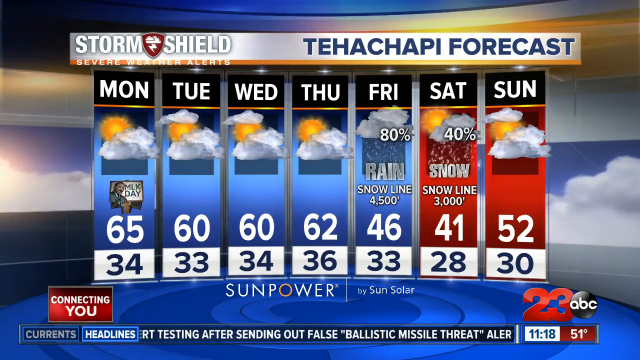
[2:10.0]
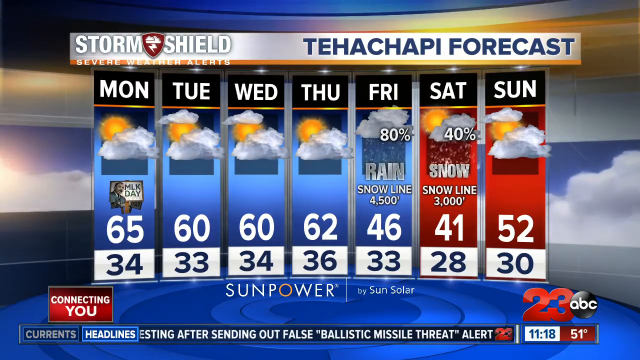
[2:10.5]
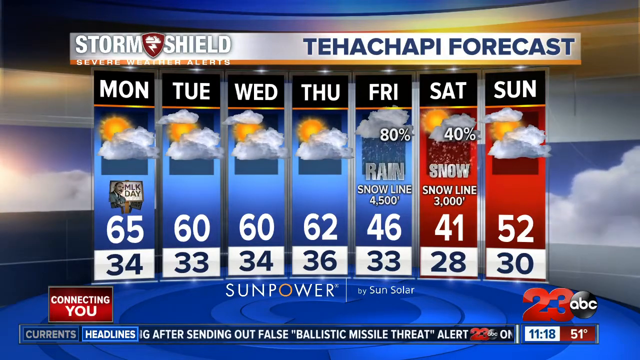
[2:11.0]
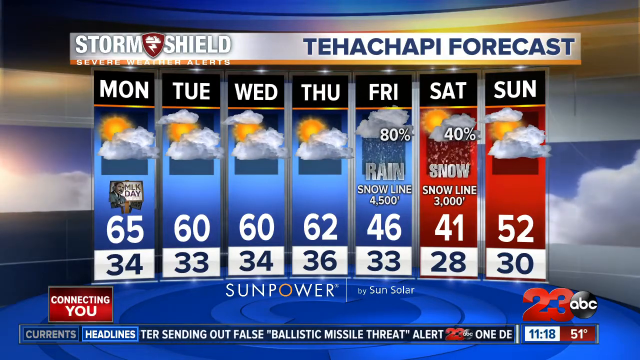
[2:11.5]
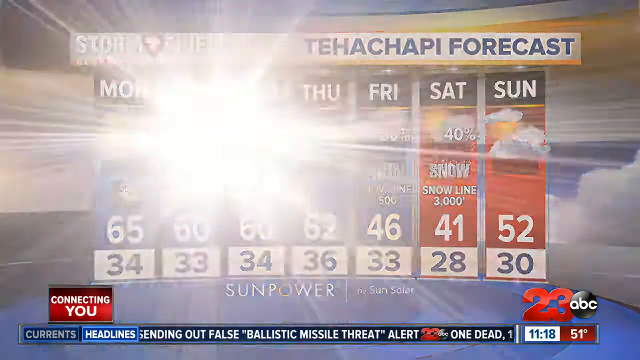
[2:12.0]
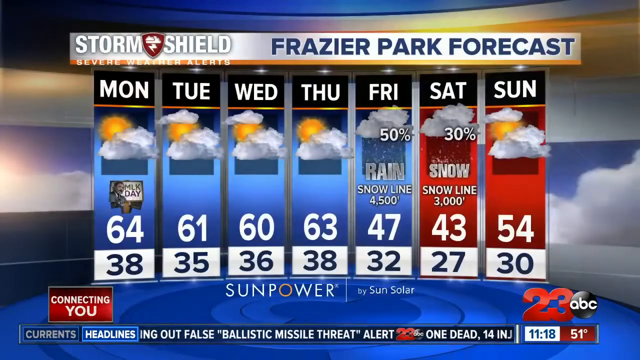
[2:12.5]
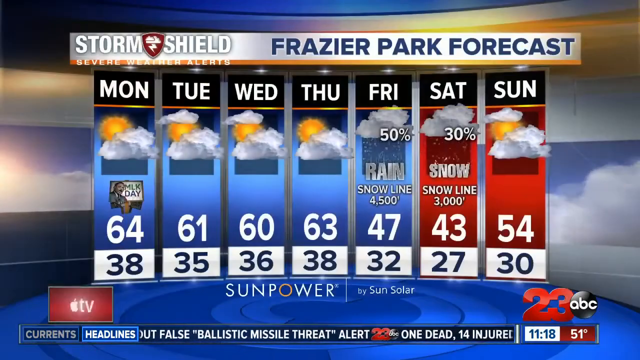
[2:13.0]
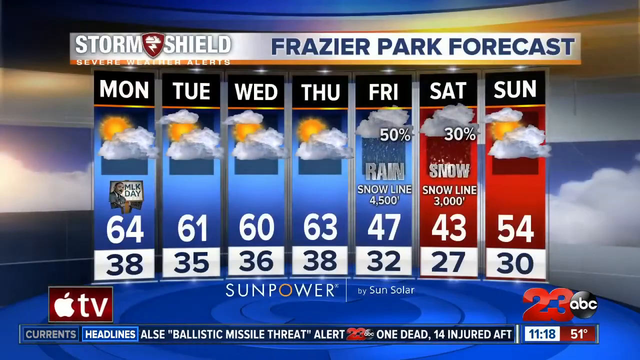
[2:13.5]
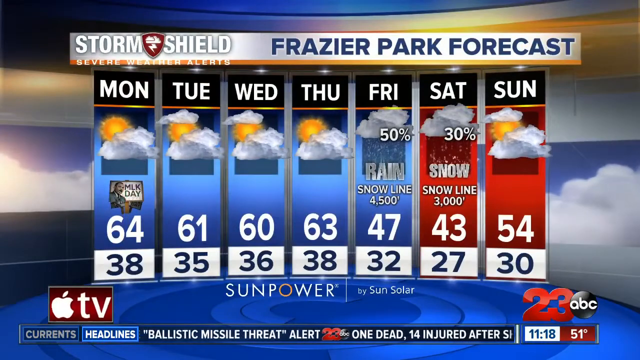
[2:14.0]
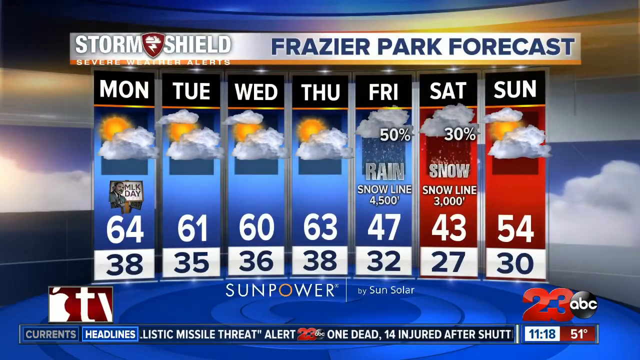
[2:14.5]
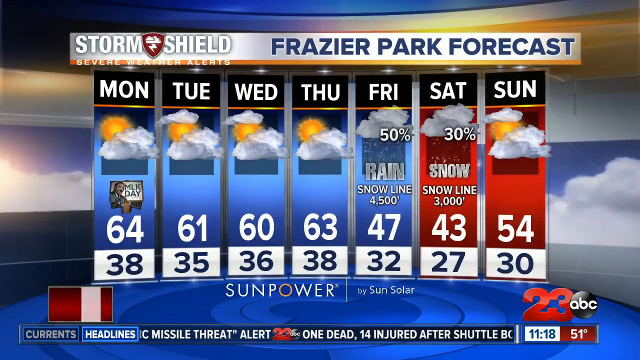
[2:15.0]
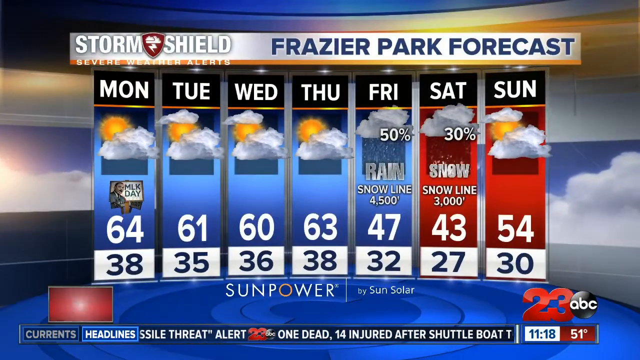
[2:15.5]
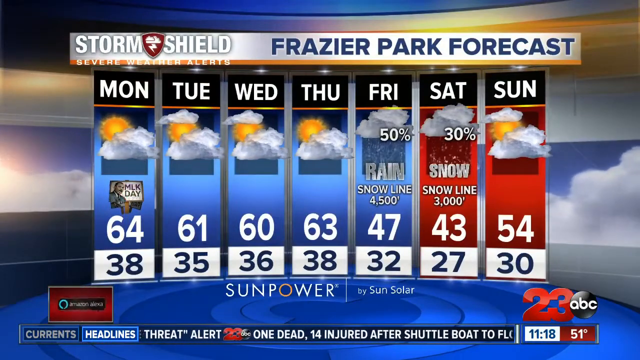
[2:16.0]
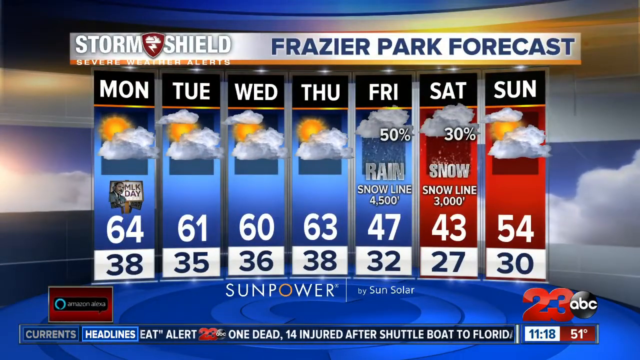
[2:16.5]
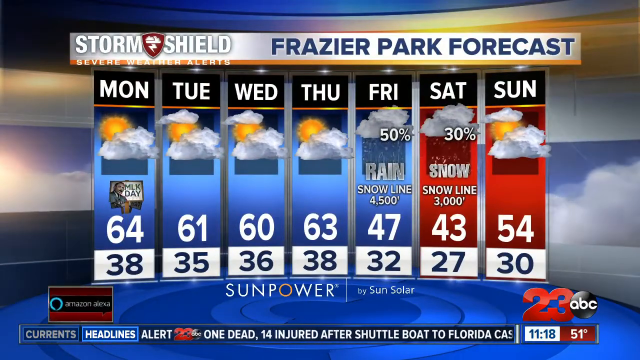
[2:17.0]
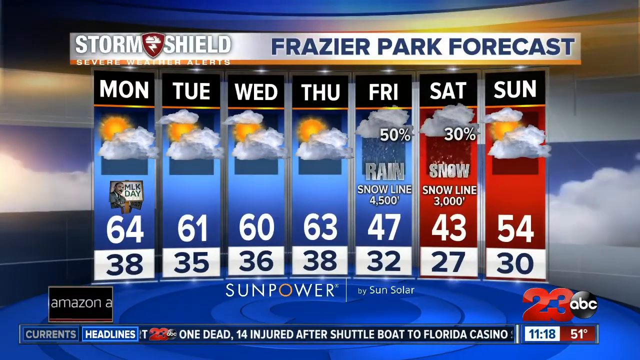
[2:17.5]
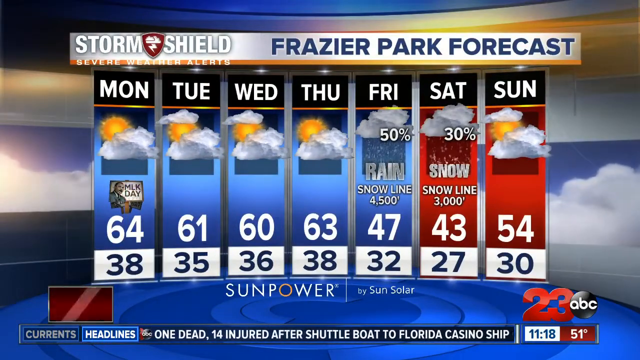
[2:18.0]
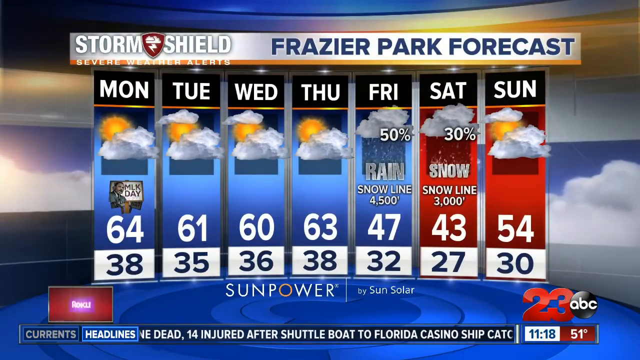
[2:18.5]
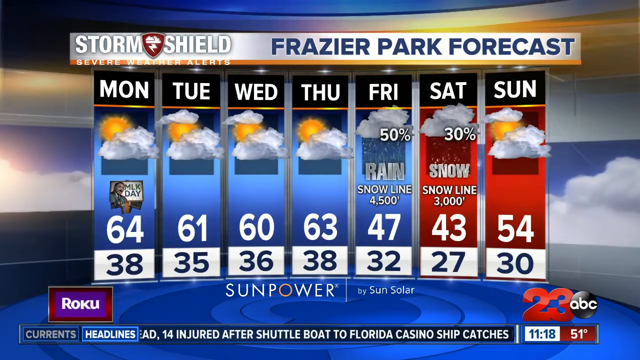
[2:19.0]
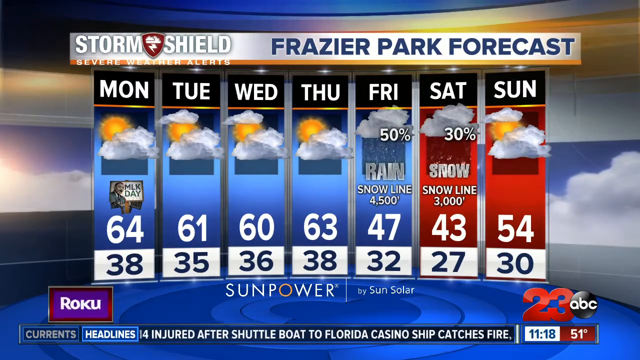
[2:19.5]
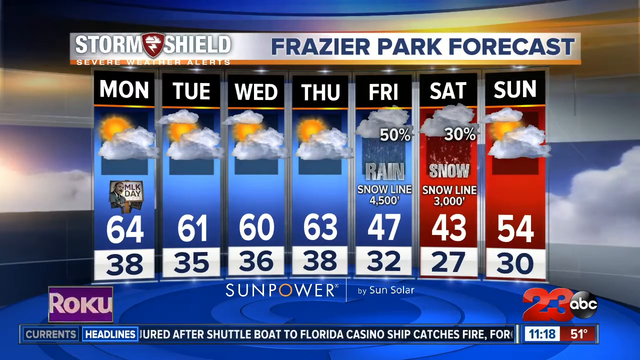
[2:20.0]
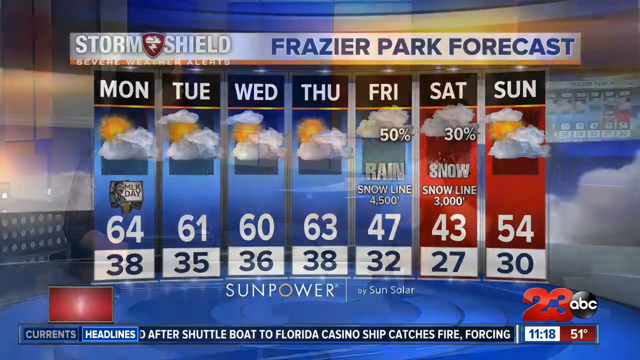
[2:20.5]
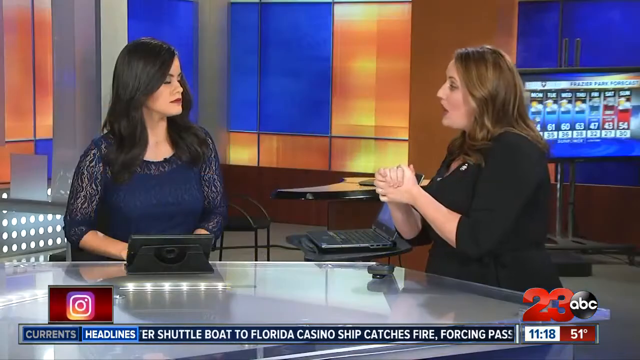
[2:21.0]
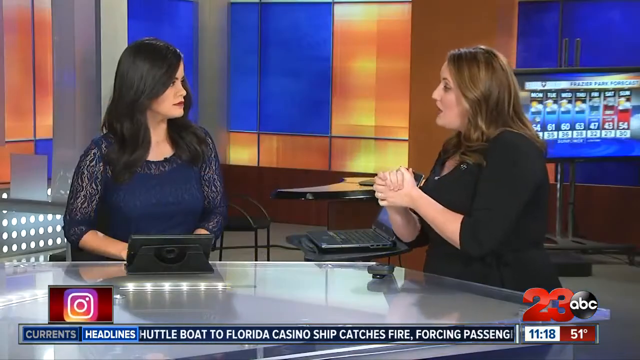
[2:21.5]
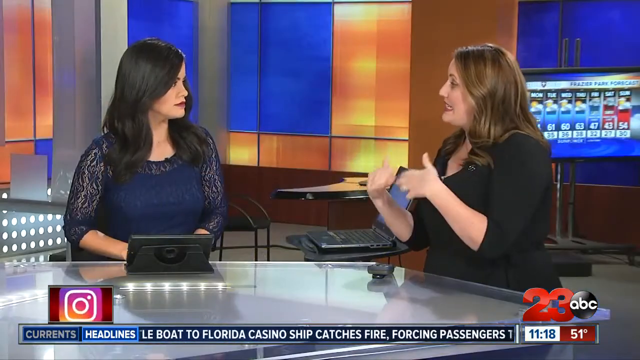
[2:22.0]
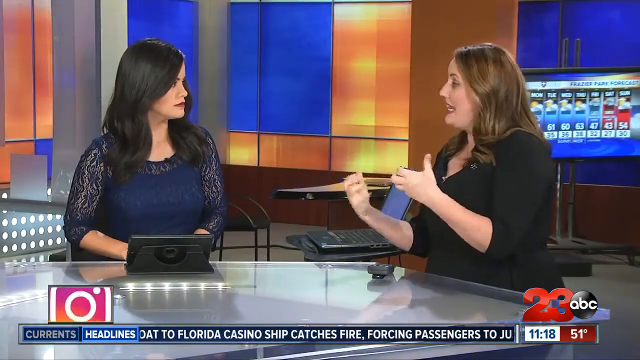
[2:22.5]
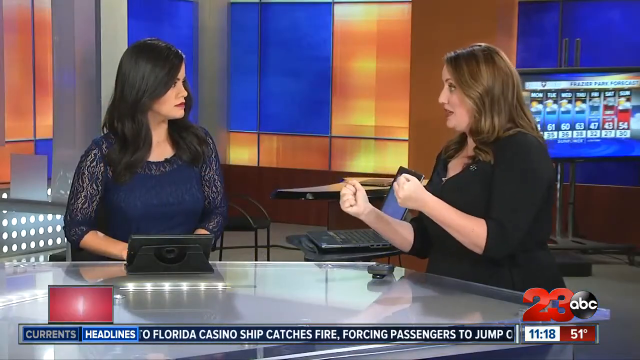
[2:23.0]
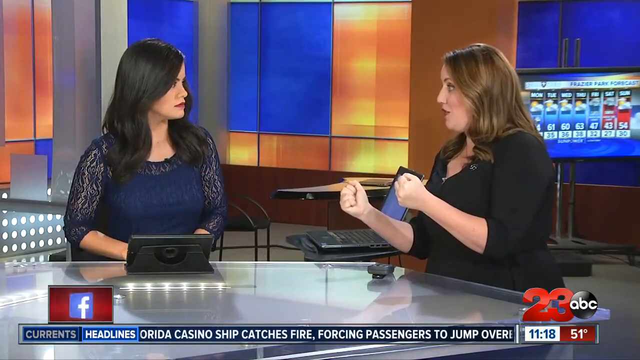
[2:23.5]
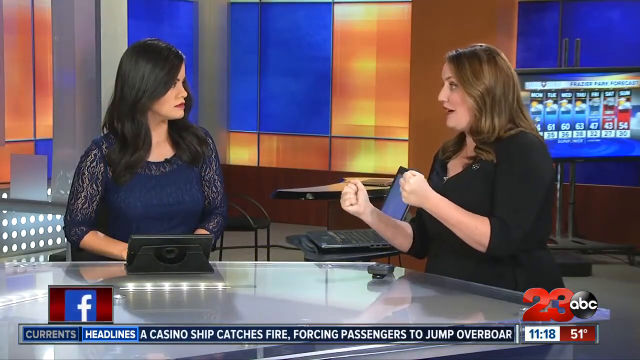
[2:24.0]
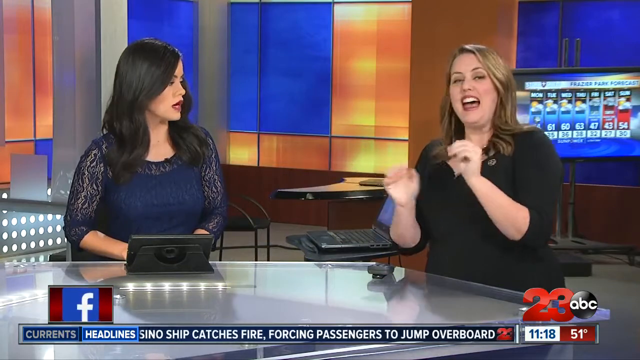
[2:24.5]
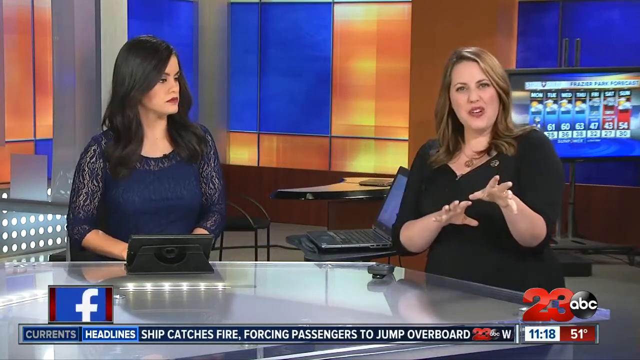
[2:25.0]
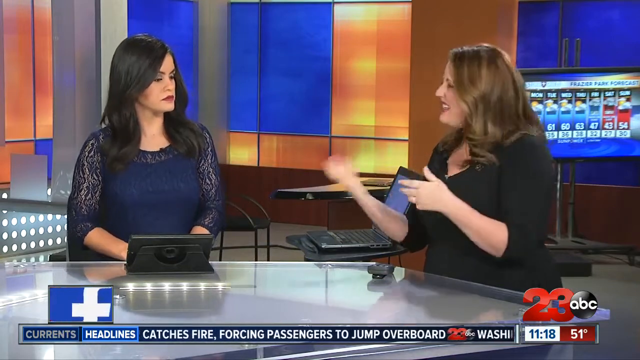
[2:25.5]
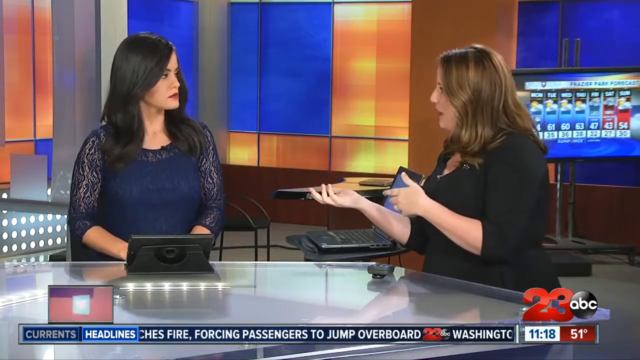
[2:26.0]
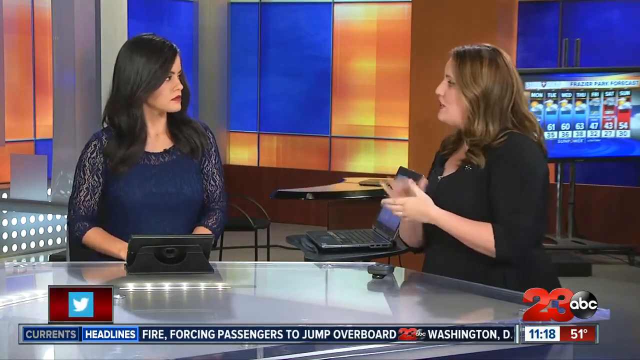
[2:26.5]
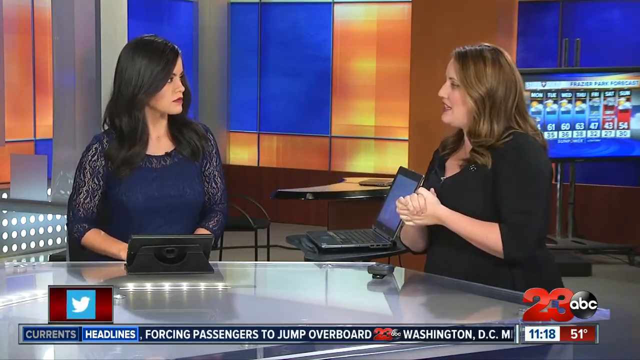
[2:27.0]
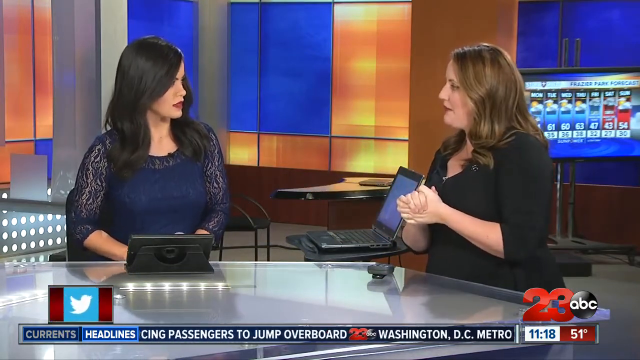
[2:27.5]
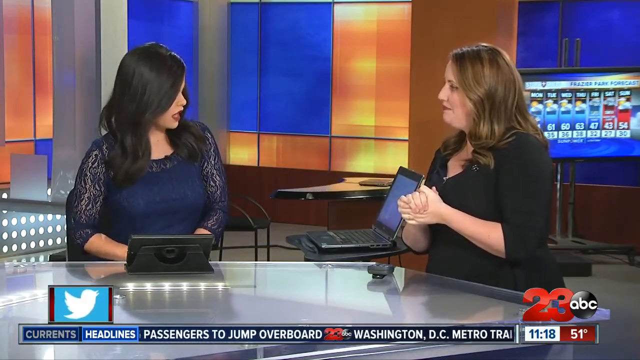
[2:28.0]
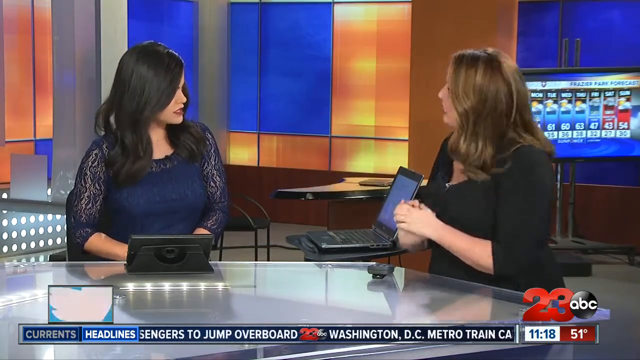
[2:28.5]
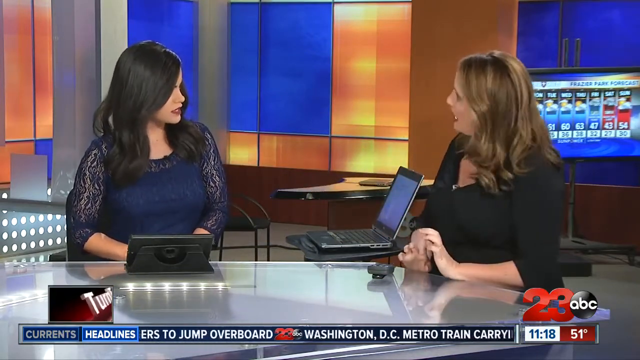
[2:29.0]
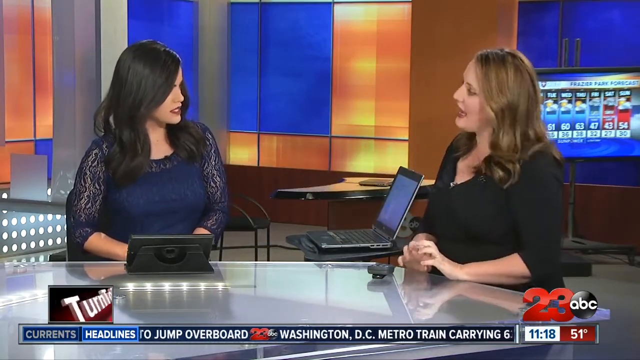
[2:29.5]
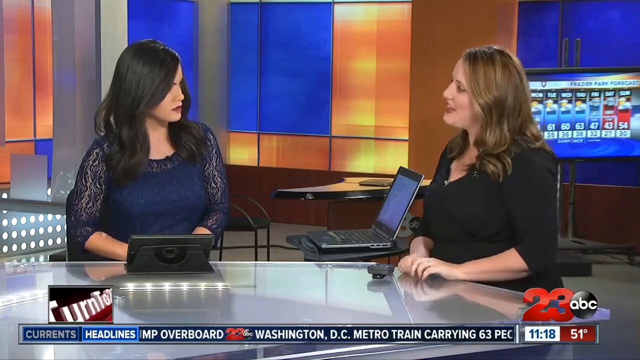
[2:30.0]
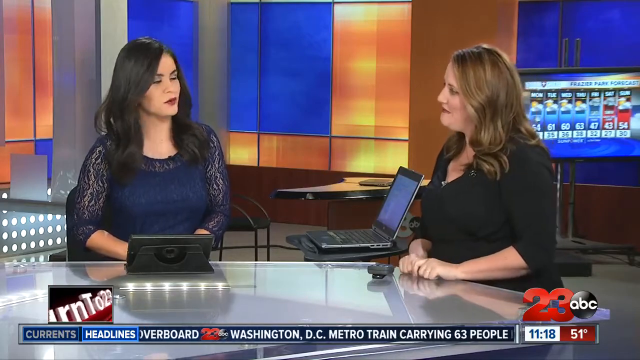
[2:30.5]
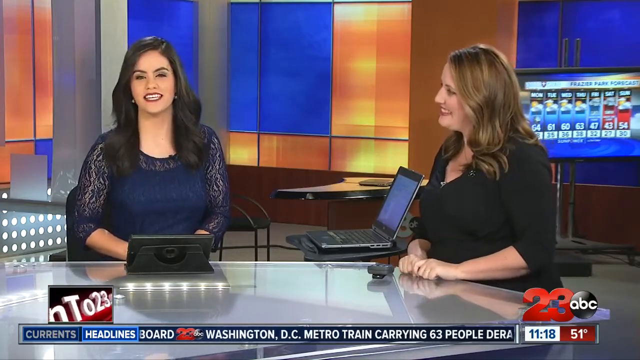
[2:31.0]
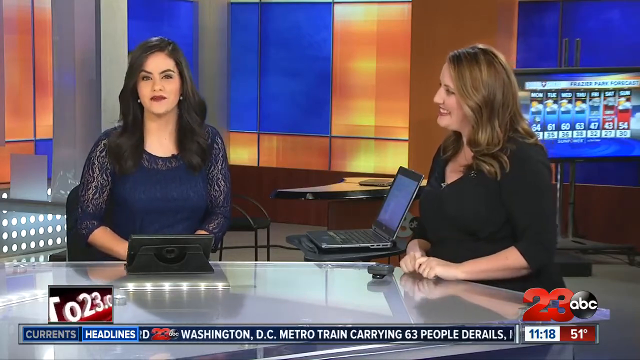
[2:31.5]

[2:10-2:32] The News Channel 23 storm shield weather alert gives the forecast for Tehachapi from Monday through Sunday, in the same graphic design of vertical columns, blue for Monday through Friday and red for Saturday and Sunday. It shows rain and snow, with 4.5 inches of snow at the snow line, then snow on Saturday with a 40% chance of snow at the snow line and "3 inches" shown. The lowest temperature in Tehachapi is 28. The forecast then moves to Fraser Park, which is also shown getting snow, with a low of 27 degrees on Saturday.